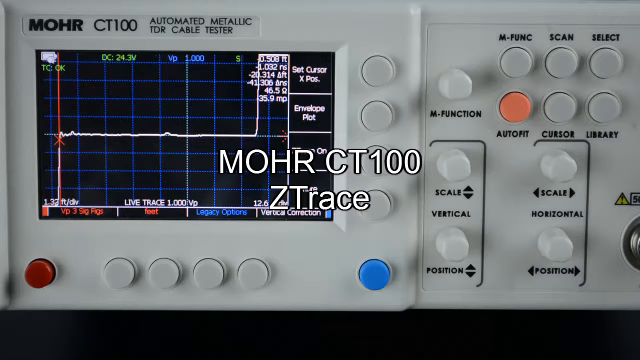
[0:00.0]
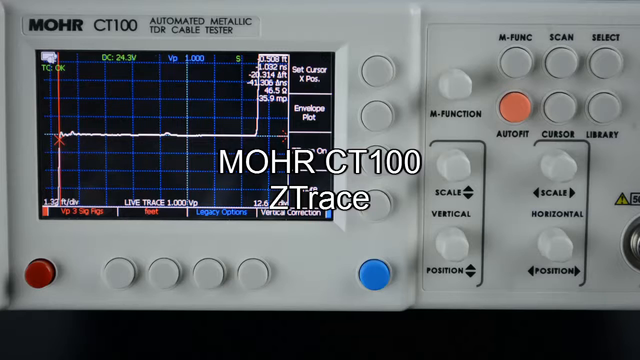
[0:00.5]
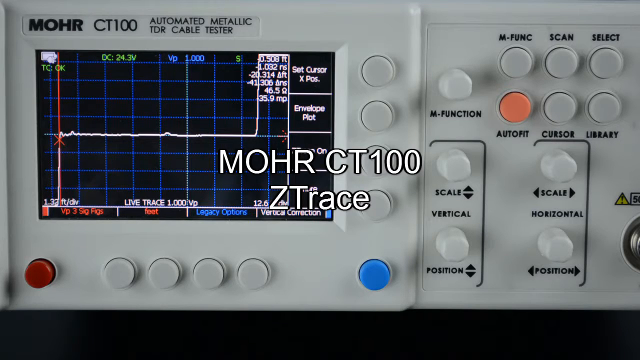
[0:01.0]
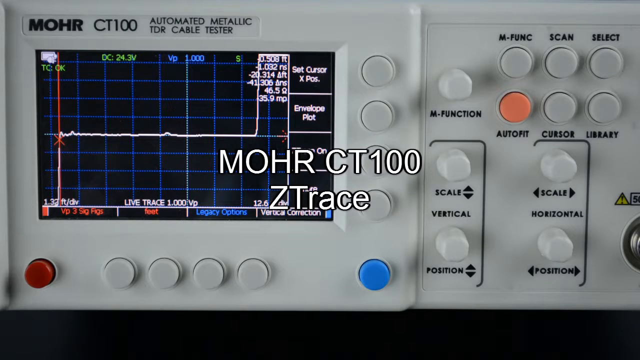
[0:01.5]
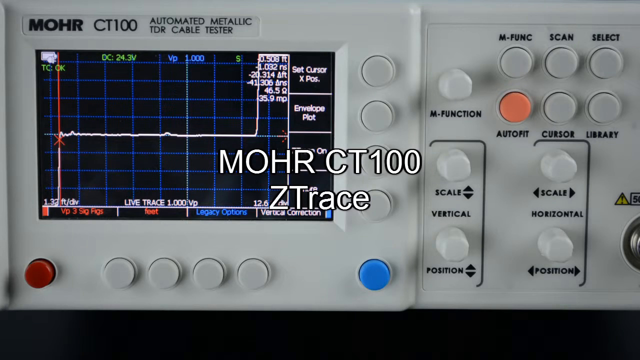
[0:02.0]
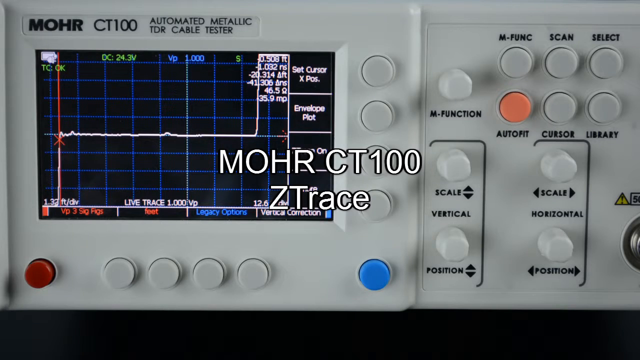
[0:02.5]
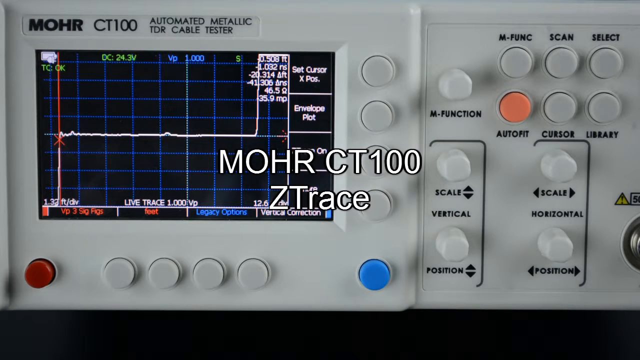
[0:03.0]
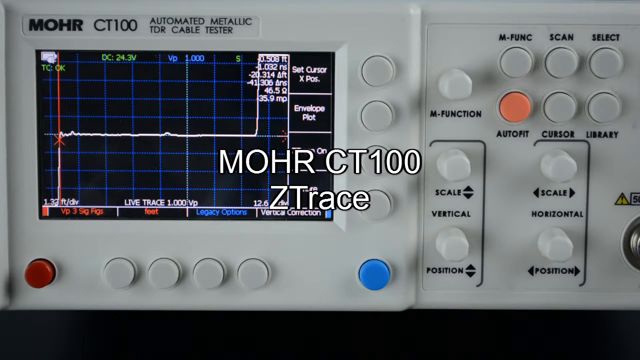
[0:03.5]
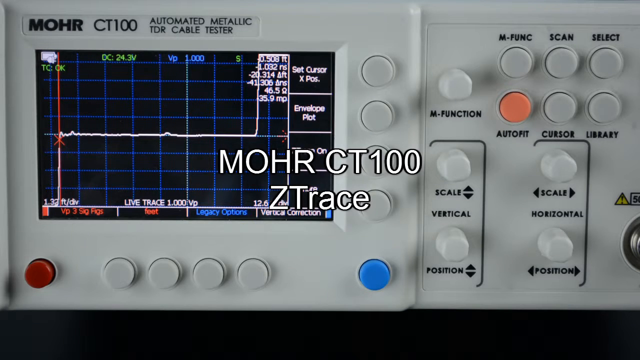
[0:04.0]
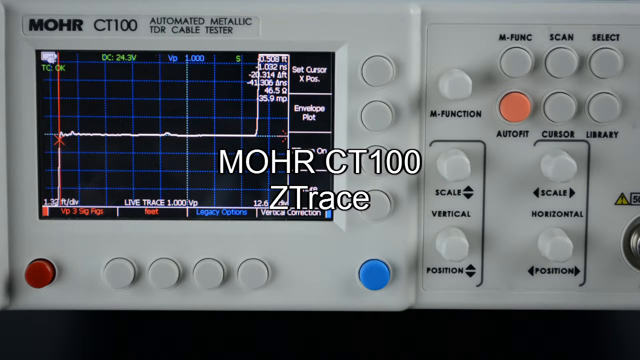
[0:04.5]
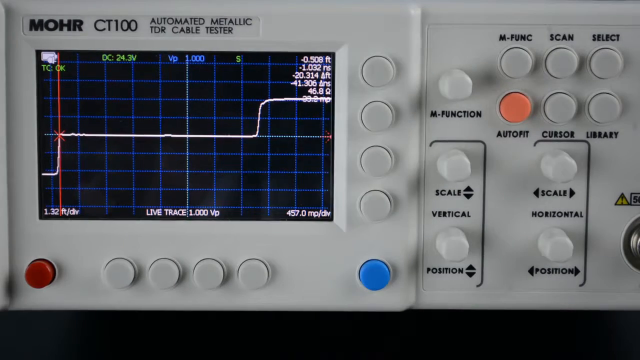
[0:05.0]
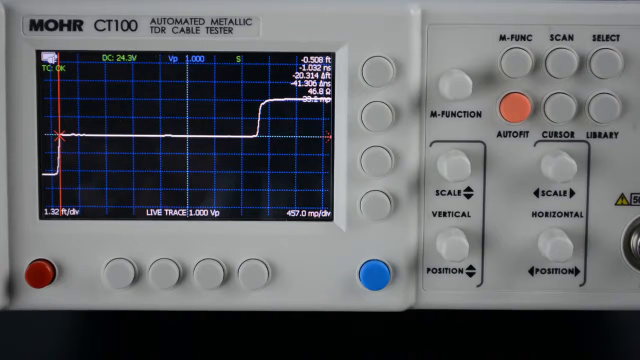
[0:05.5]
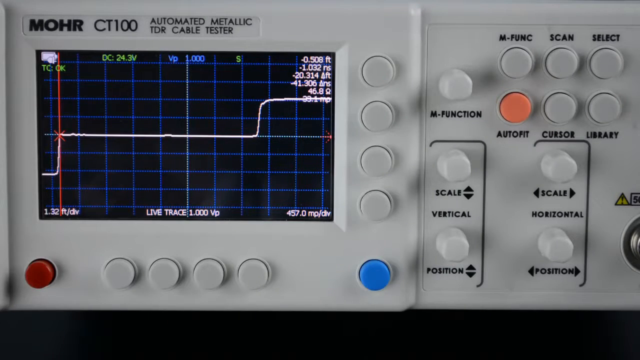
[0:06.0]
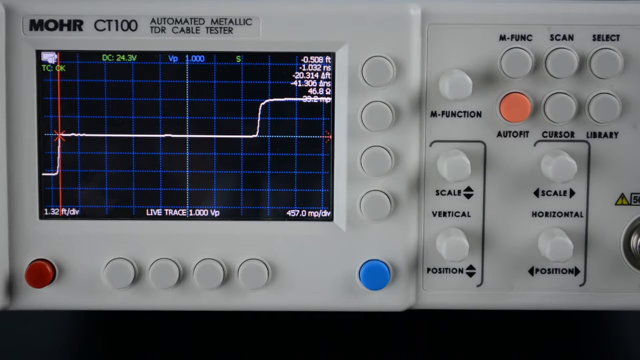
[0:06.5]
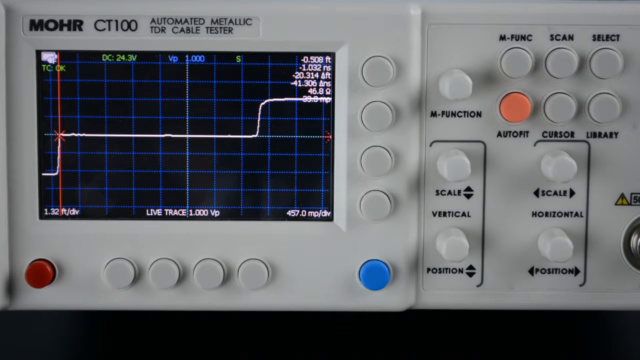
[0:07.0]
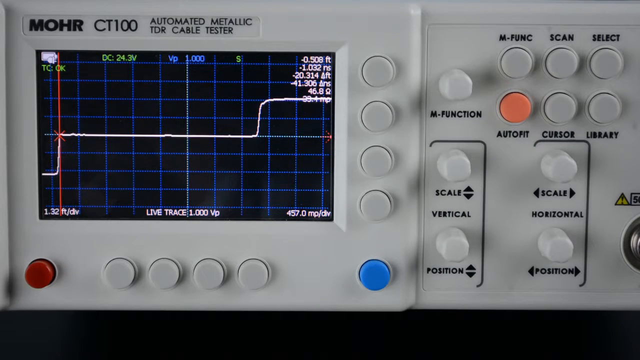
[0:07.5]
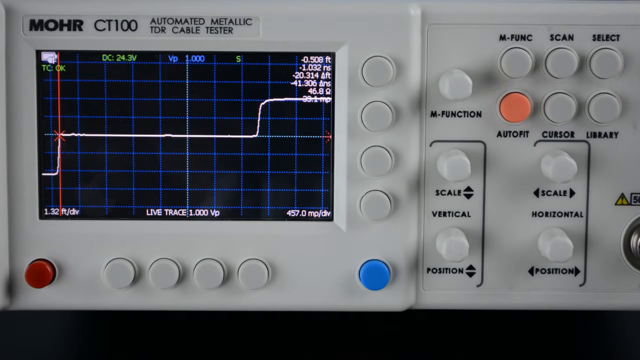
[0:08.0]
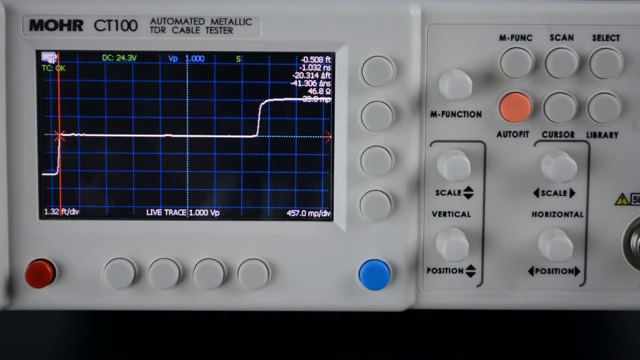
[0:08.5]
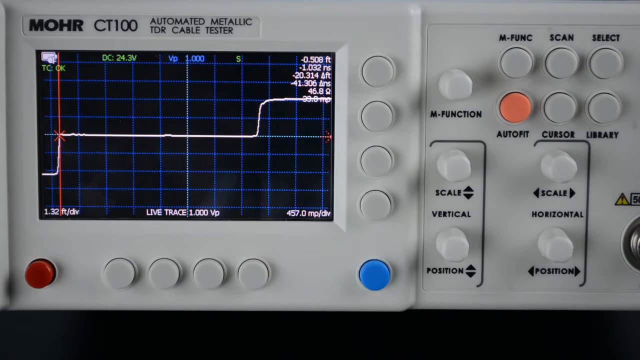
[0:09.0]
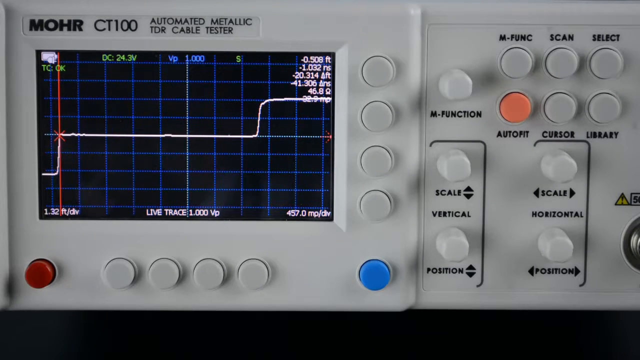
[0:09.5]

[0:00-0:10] A zoomed-in view of a device is shown. A white text overlay in the centre of the screen reads "MOHR CT100" on the first line and "ZTrace" on the second. In the top left-hand corner of the device is the description "Automated Metallic TDR Cable Tester". On the left side of the device is a rectangular LCD screen with buttons underneath and on its right side, and the right-side section of the device has more buttons and dials. The screen shows a black background with a blue grid, and a white curved line runs along the center like a moving graph.